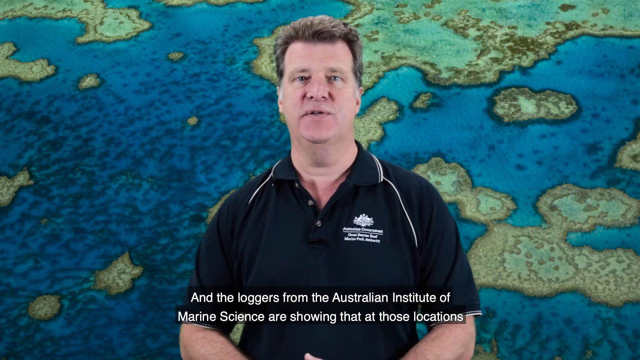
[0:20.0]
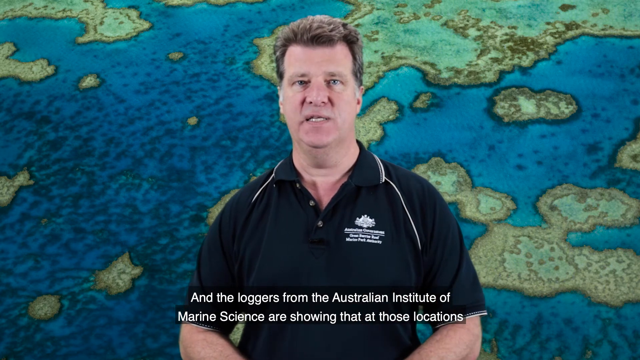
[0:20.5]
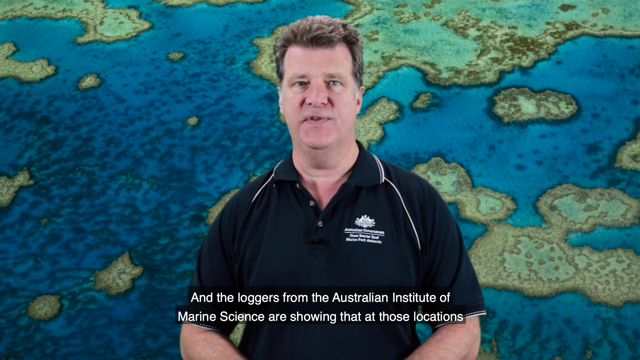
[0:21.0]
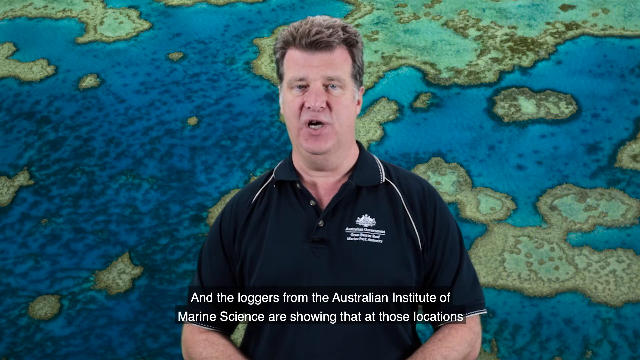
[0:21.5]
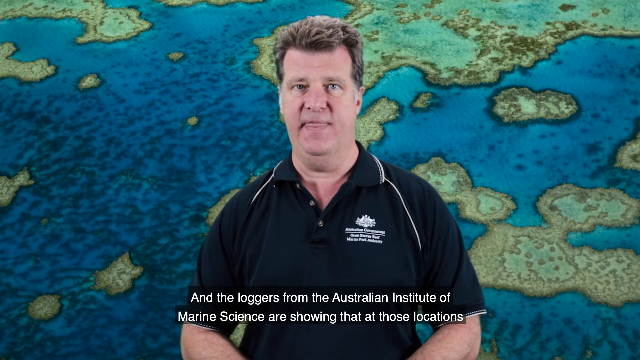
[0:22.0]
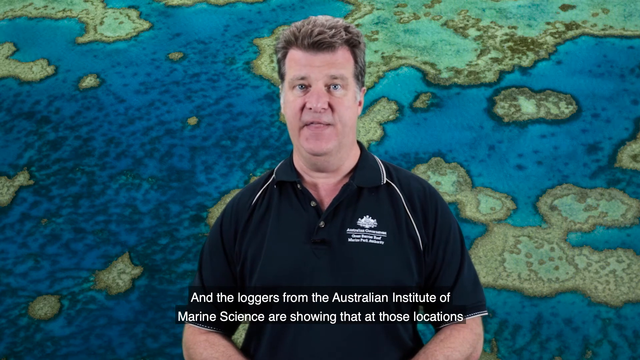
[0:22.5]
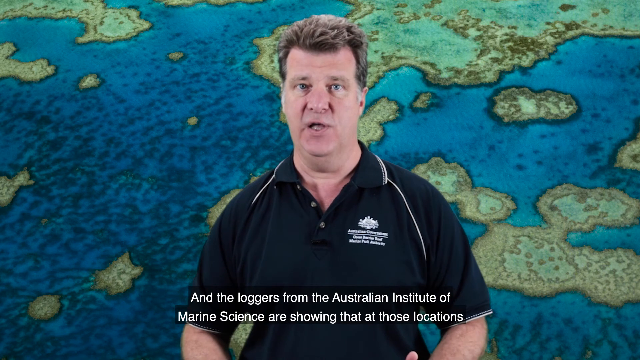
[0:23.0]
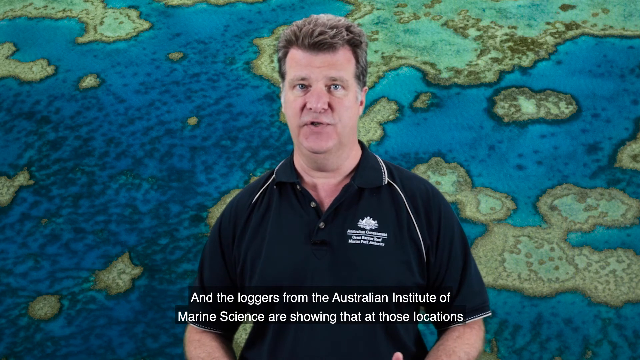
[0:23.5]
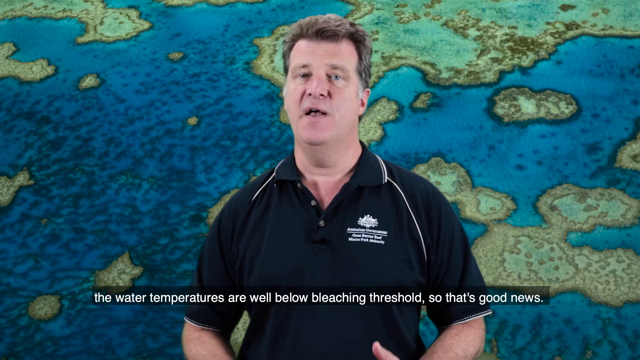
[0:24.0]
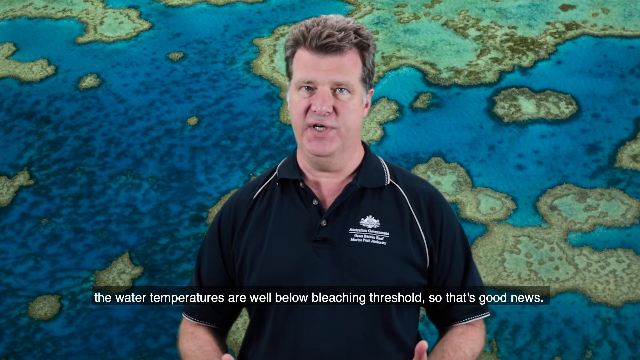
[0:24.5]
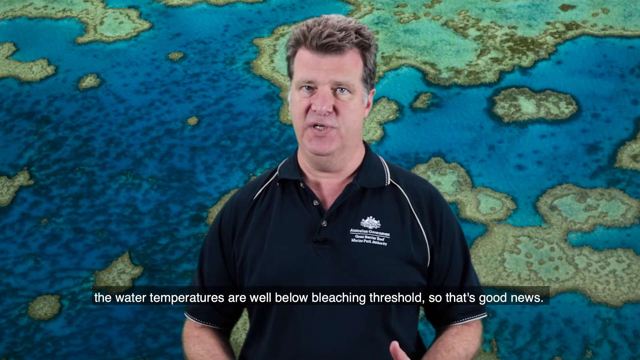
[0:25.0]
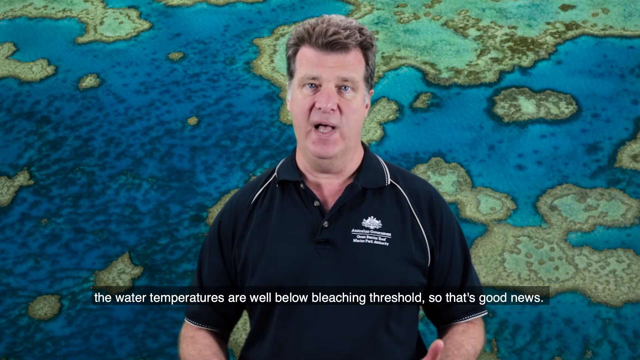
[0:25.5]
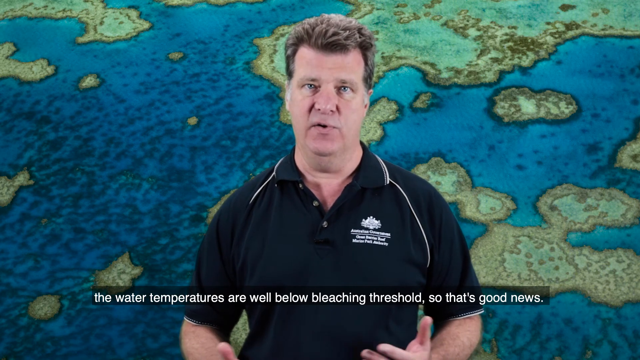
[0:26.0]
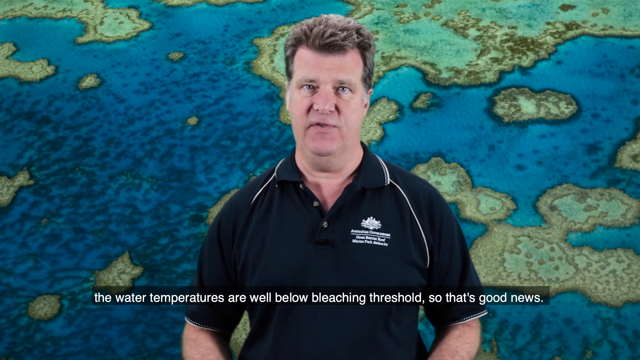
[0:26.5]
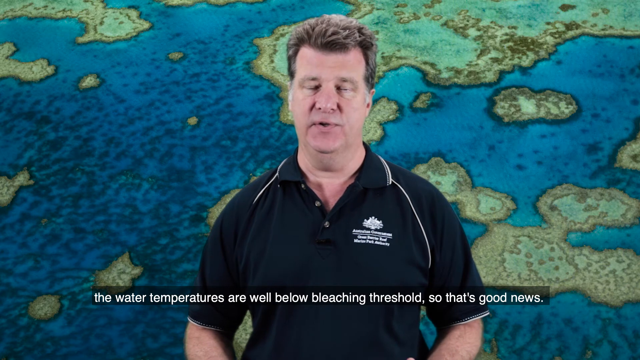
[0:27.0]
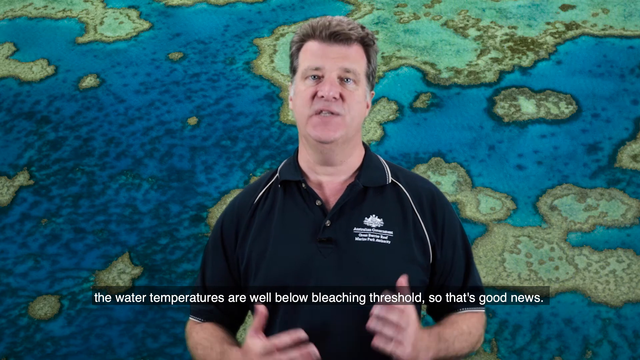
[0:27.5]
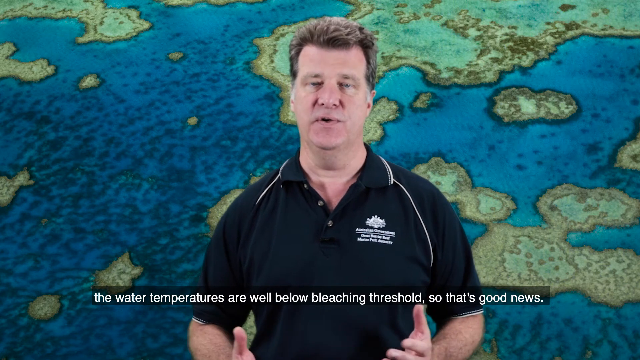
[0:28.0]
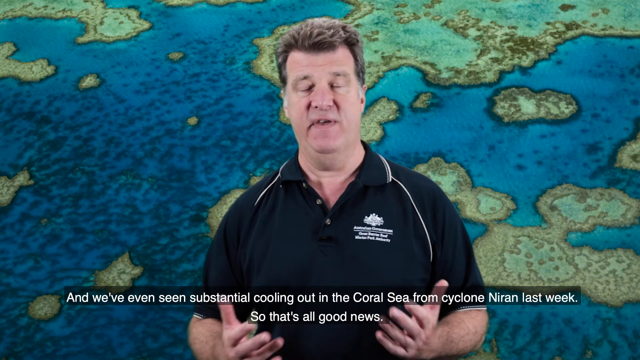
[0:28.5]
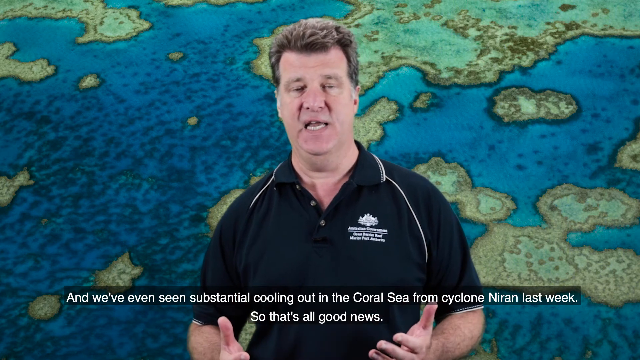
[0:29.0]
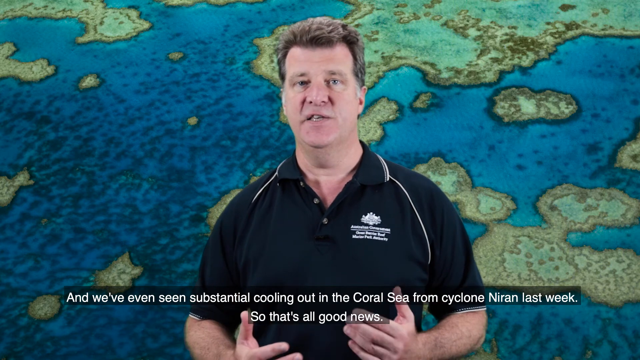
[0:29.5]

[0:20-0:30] The man stands in front of the camera, talking and using his hands, which move up and down. He stays focused straight toward the screen, standing firmly and steadily without distraction as he reports to the viewers.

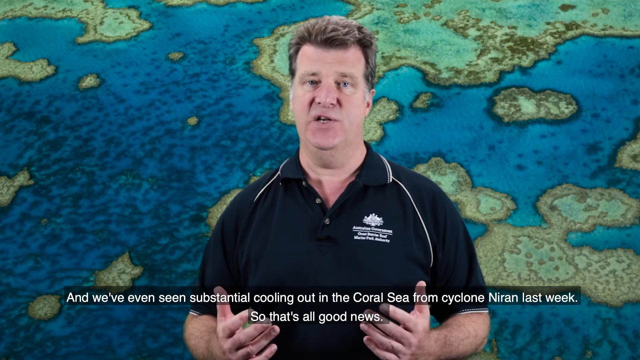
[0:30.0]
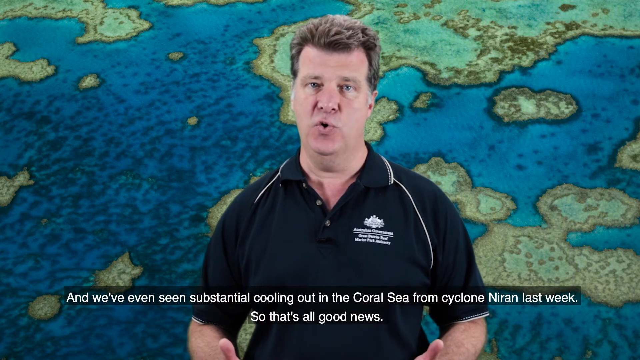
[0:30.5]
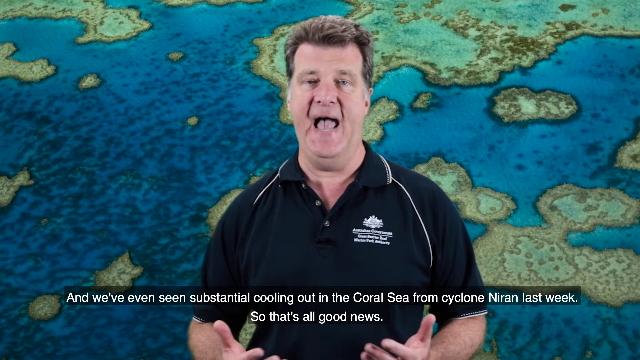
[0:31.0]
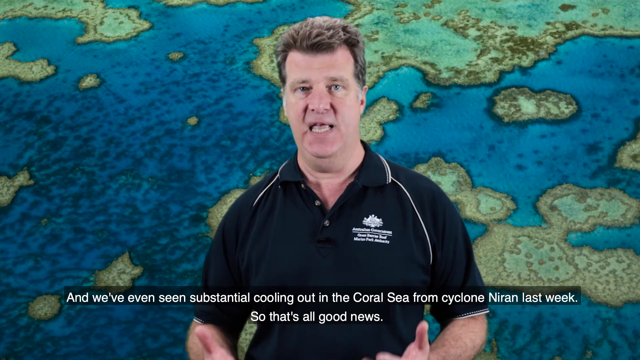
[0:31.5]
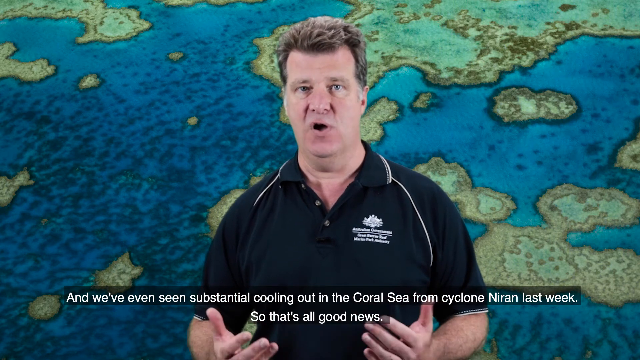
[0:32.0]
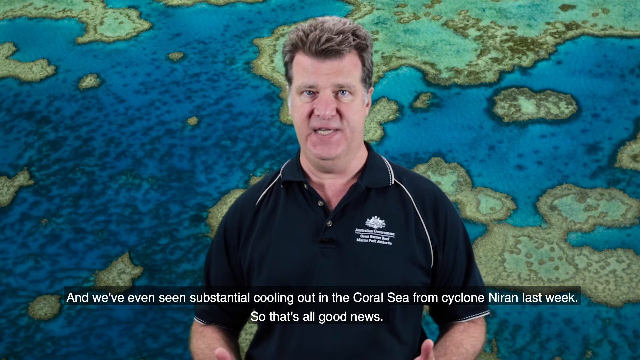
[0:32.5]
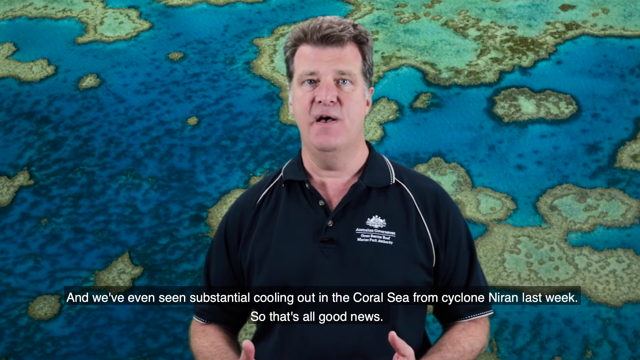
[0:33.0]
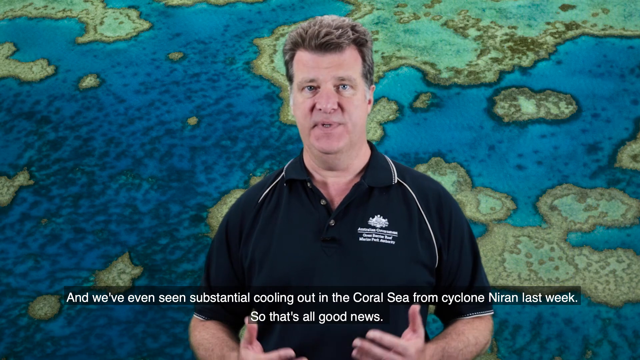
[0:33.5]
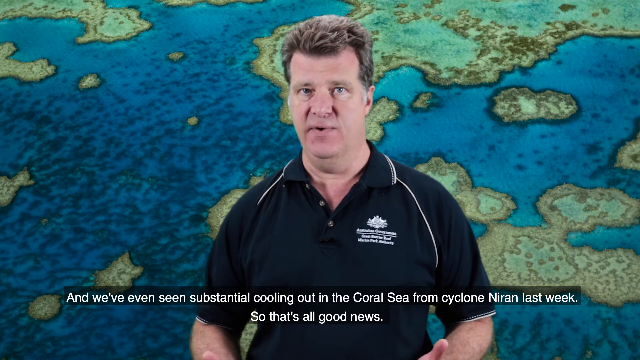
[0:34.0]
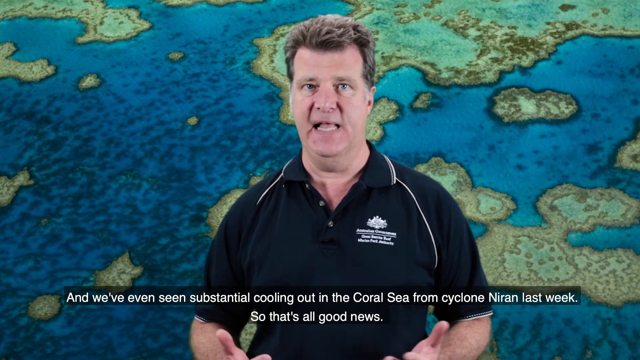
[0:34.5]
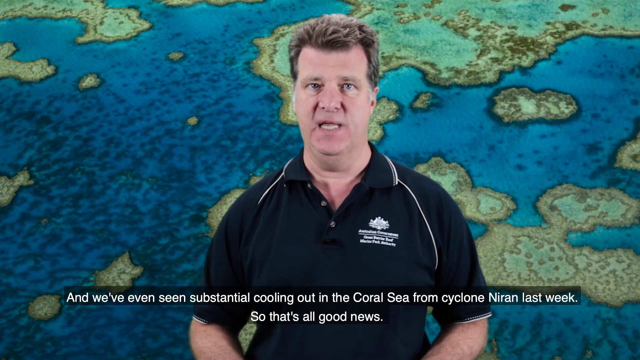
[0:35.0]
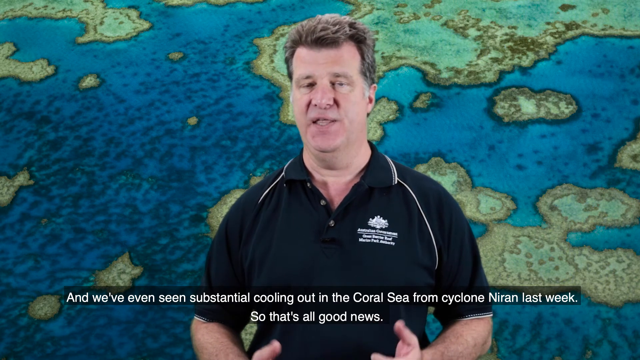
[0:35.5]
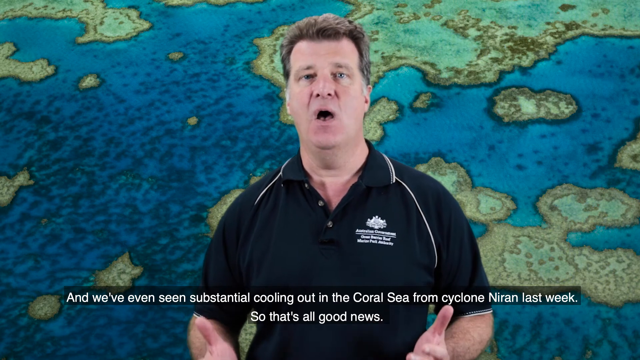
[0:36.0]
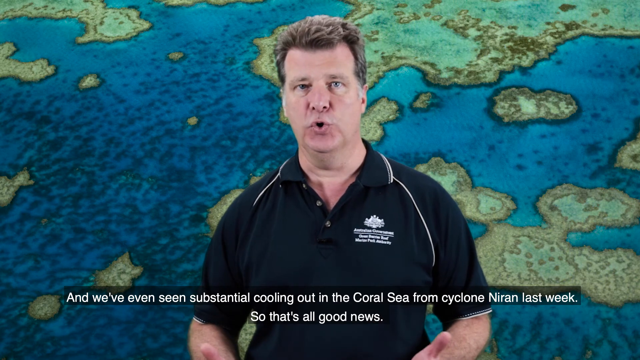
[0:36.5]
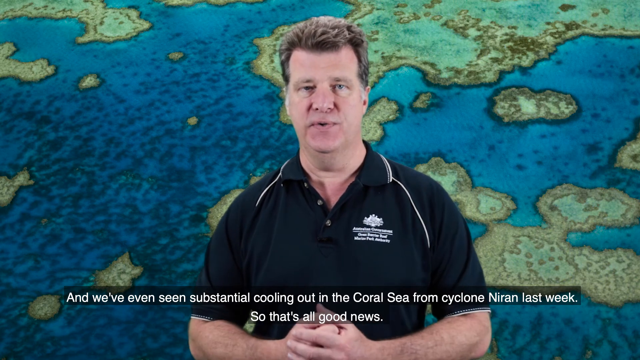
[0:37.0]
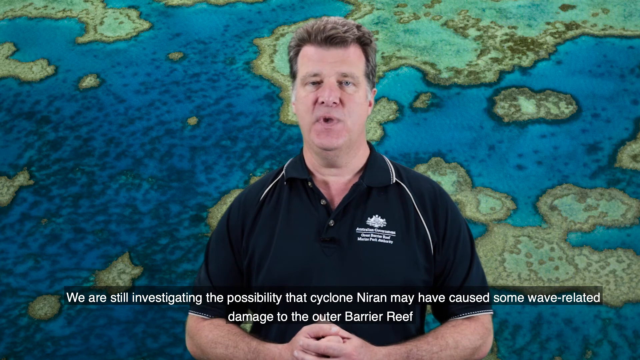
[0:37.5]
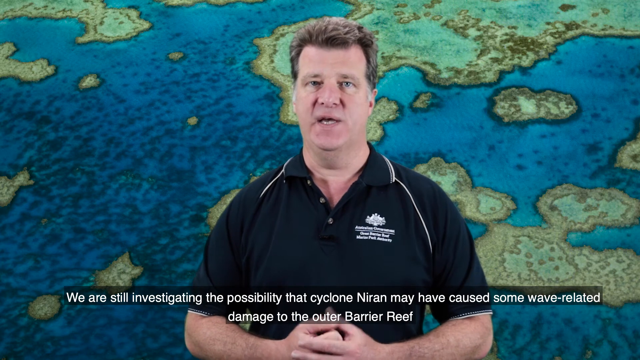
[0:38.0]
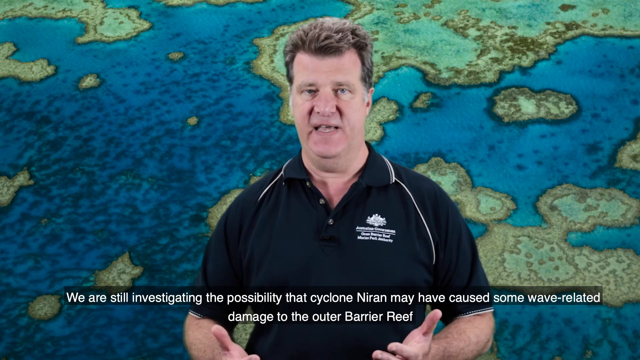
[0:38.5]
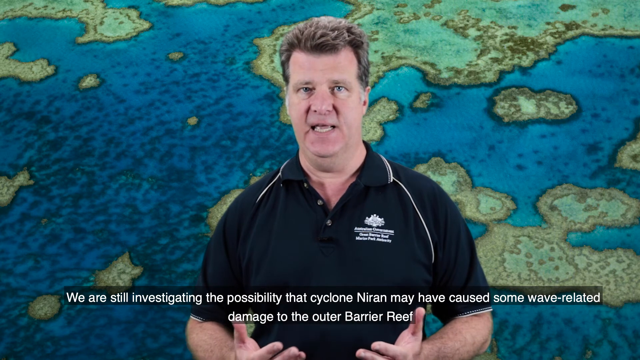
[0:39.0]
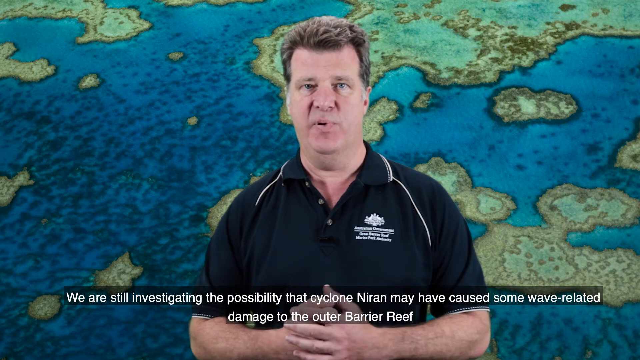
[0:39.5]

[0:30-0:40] The man continues talking.